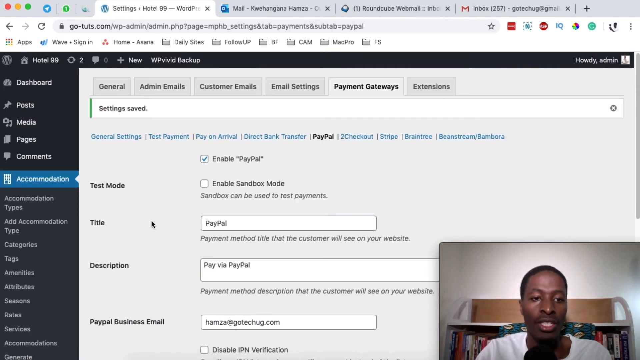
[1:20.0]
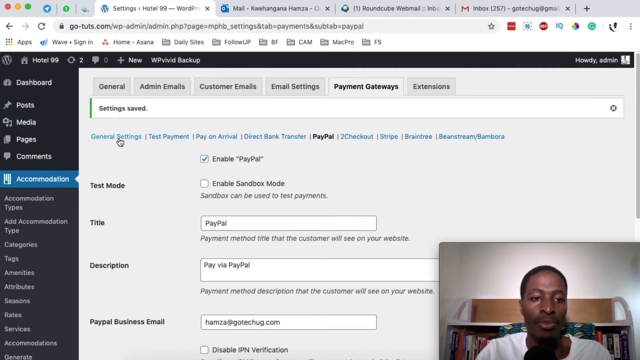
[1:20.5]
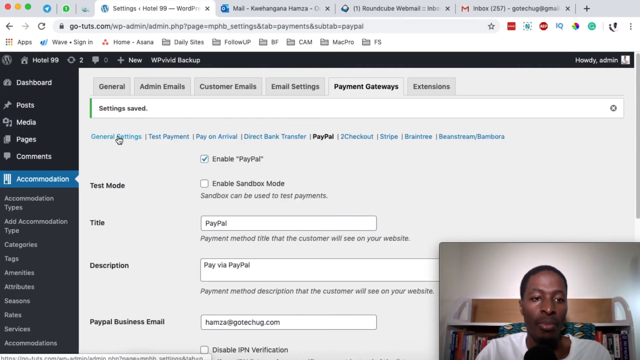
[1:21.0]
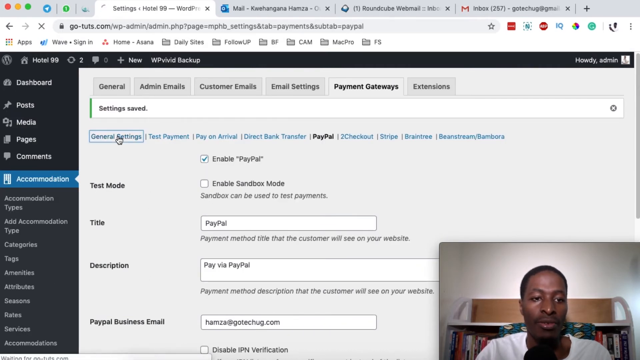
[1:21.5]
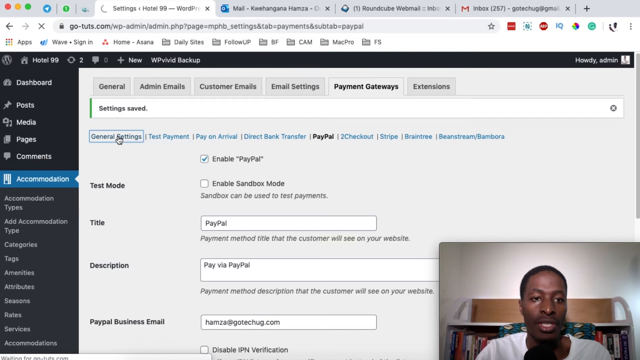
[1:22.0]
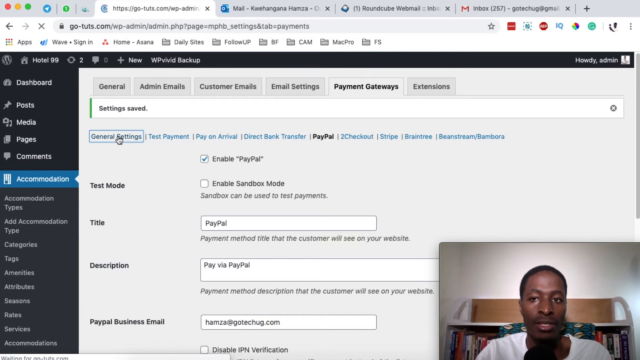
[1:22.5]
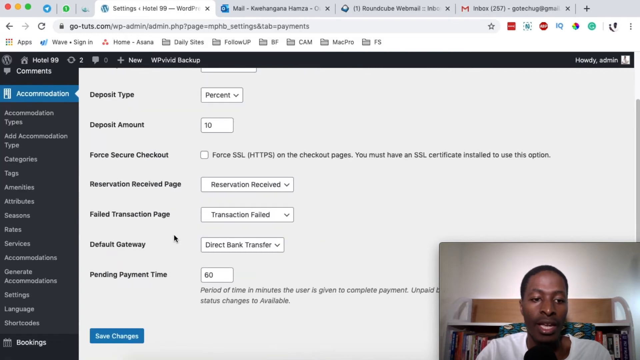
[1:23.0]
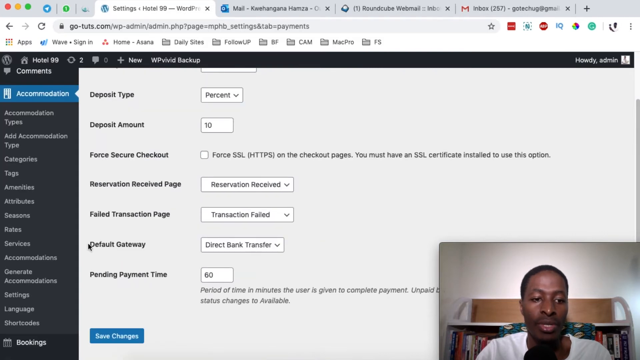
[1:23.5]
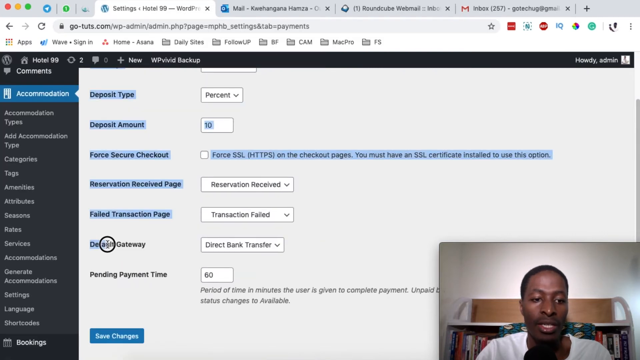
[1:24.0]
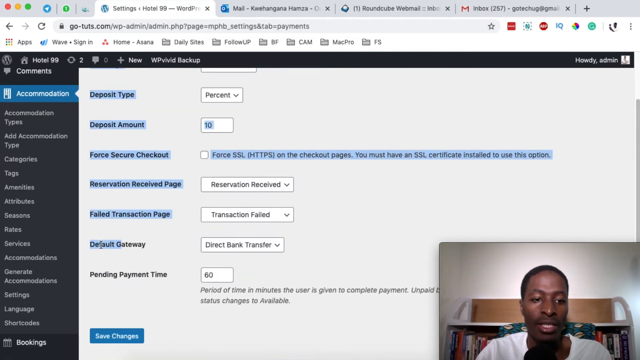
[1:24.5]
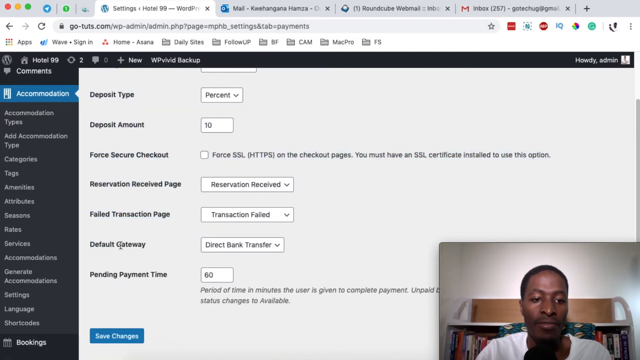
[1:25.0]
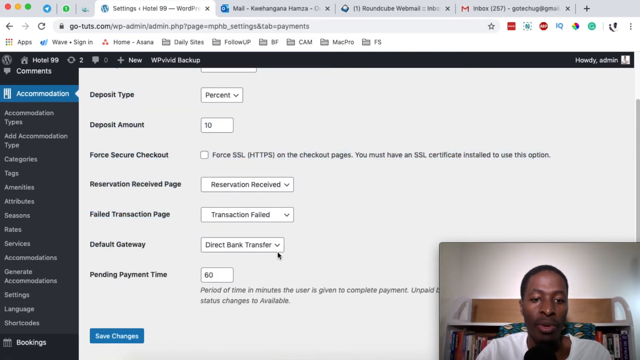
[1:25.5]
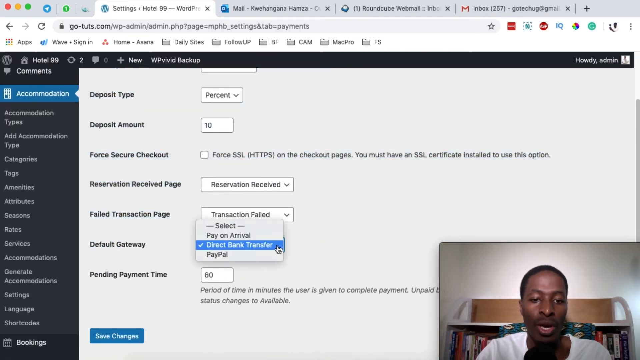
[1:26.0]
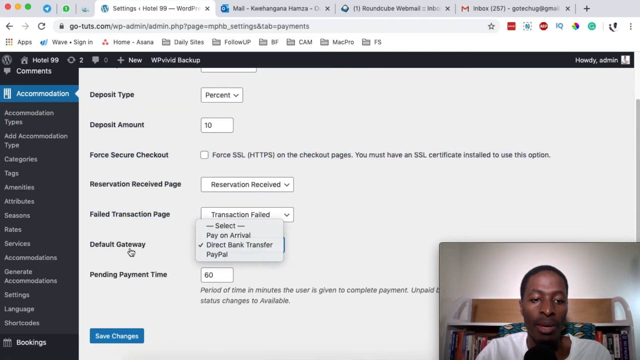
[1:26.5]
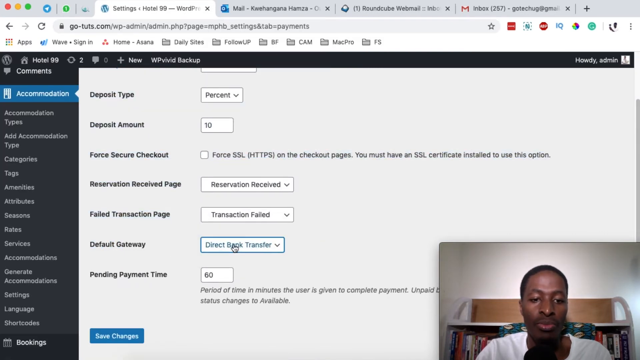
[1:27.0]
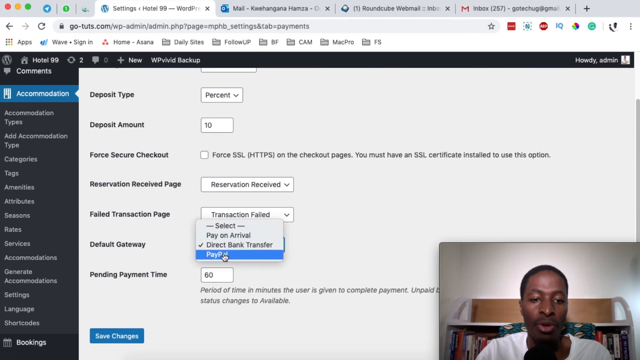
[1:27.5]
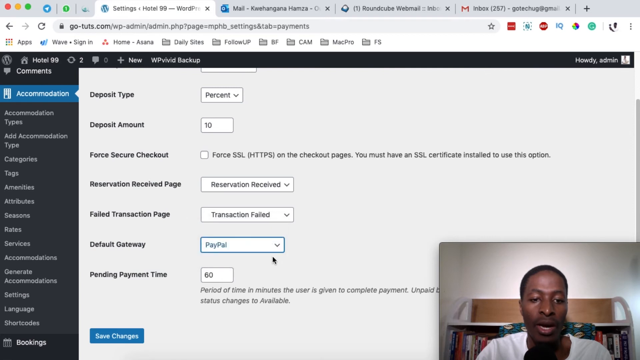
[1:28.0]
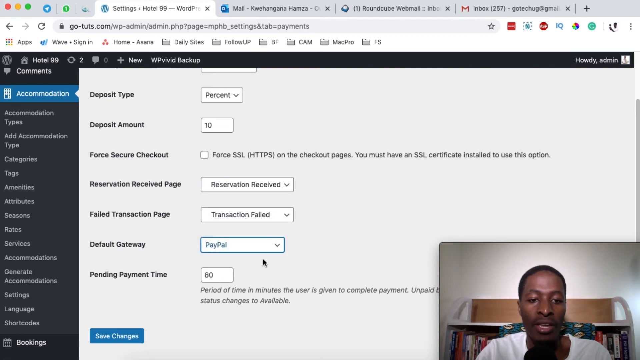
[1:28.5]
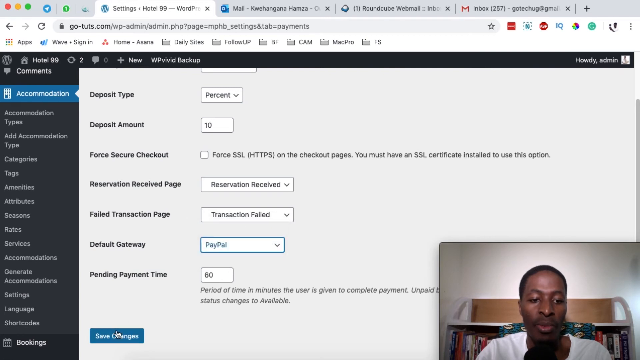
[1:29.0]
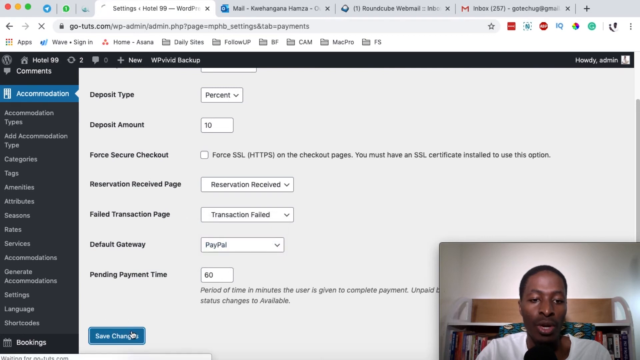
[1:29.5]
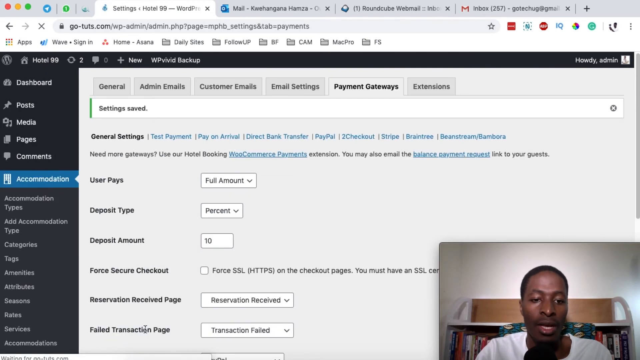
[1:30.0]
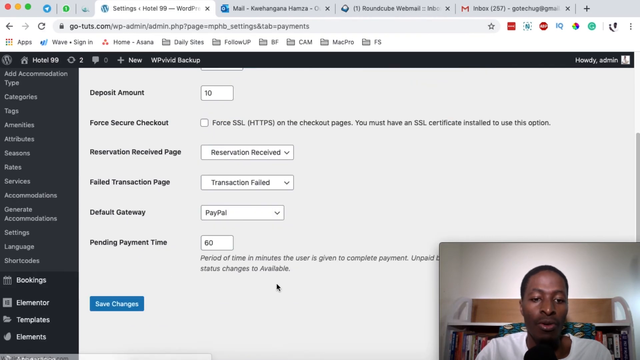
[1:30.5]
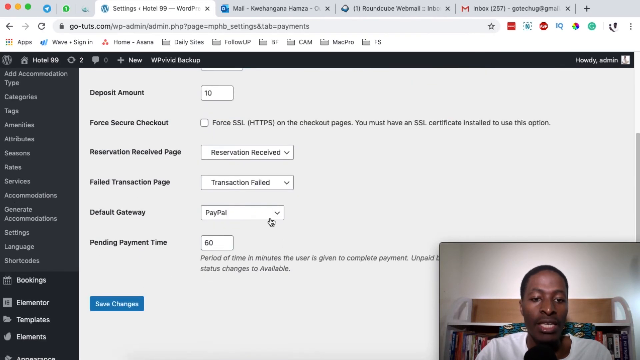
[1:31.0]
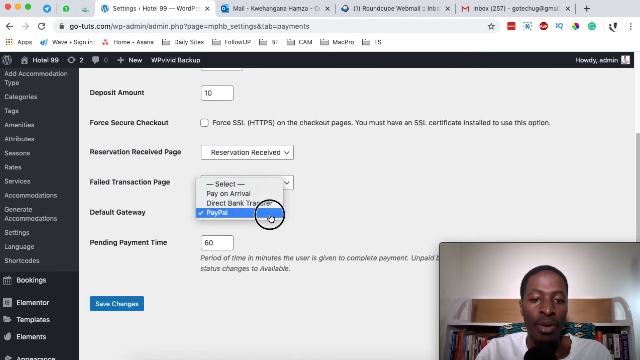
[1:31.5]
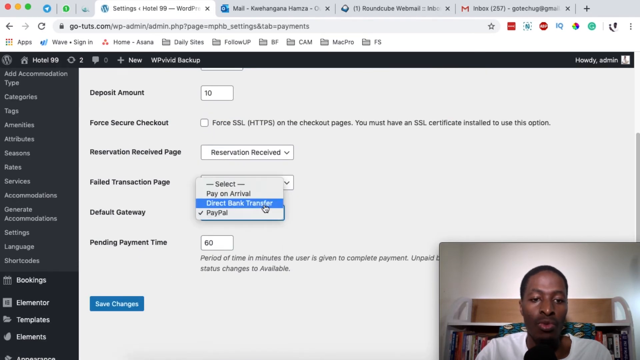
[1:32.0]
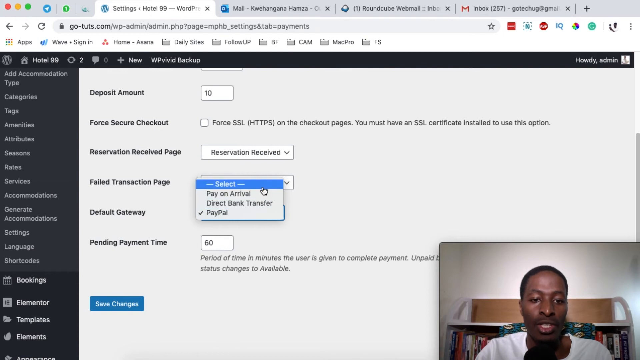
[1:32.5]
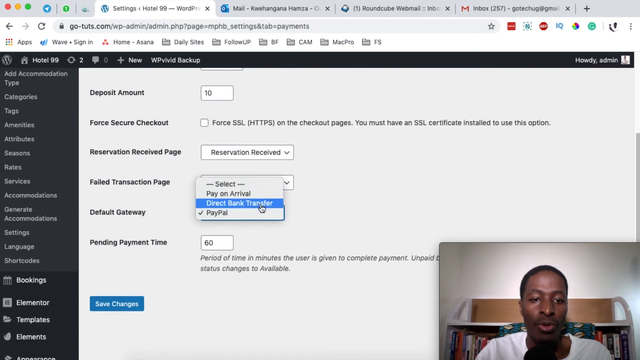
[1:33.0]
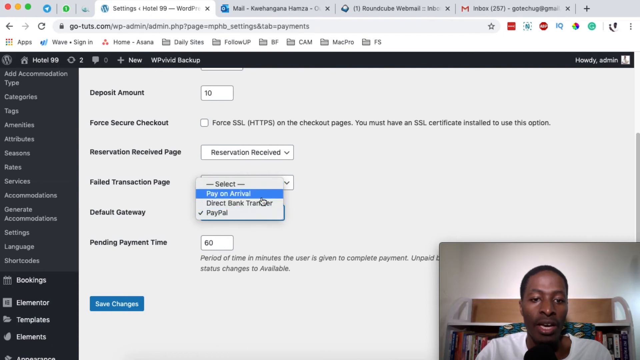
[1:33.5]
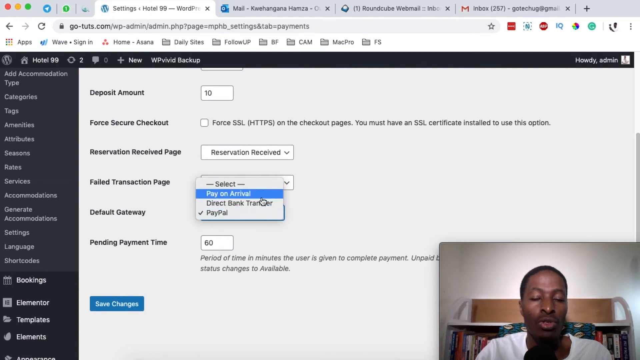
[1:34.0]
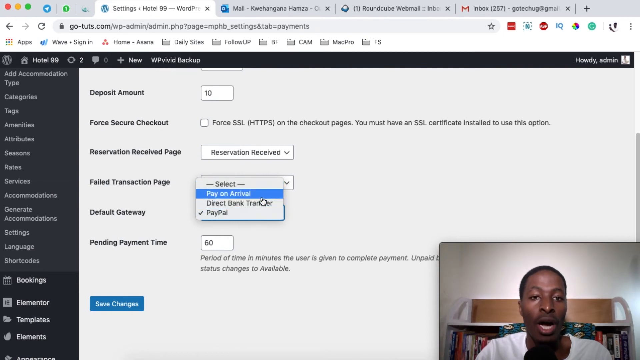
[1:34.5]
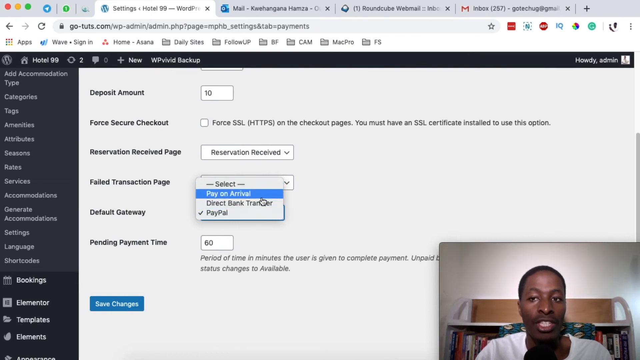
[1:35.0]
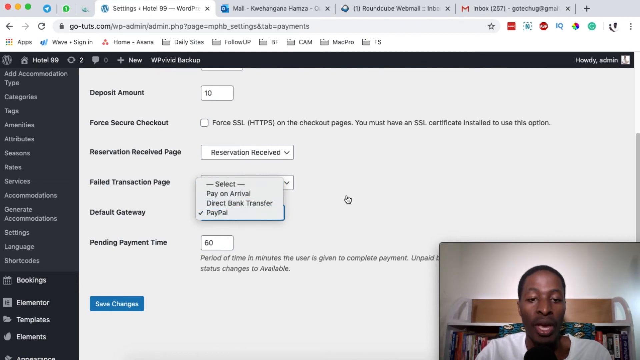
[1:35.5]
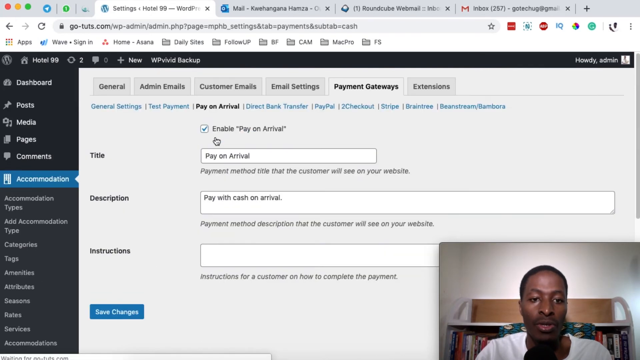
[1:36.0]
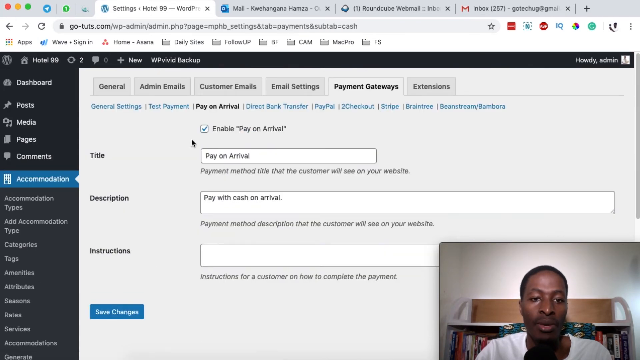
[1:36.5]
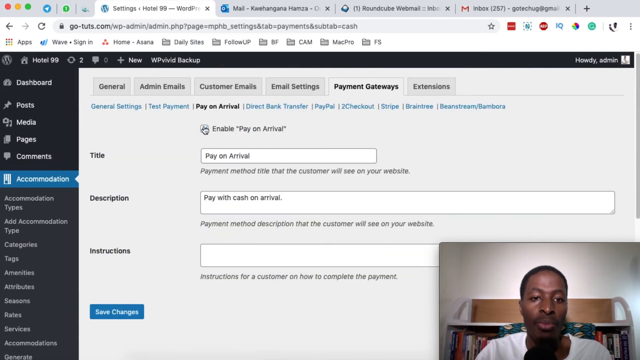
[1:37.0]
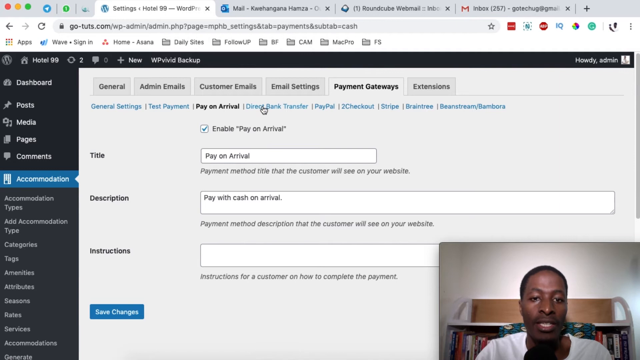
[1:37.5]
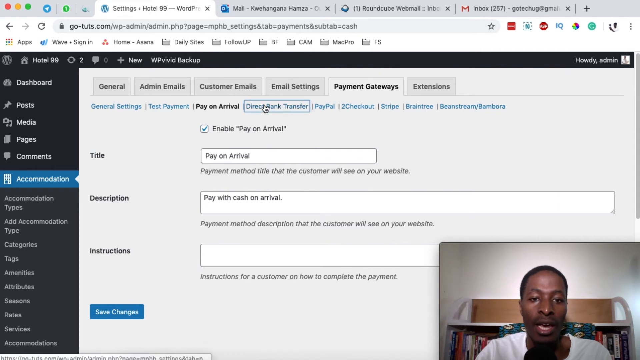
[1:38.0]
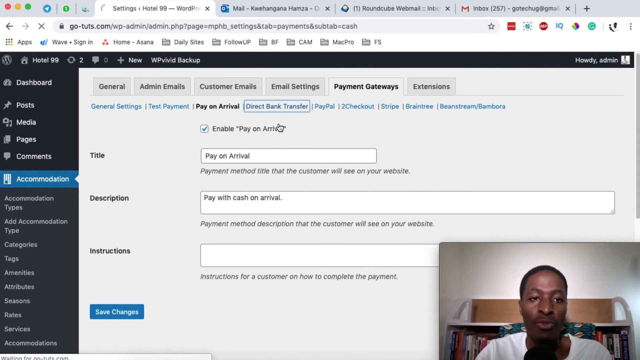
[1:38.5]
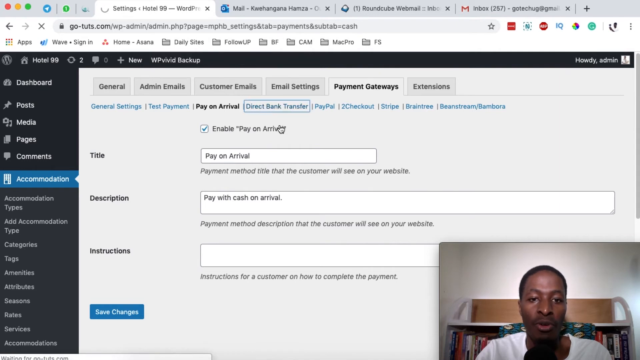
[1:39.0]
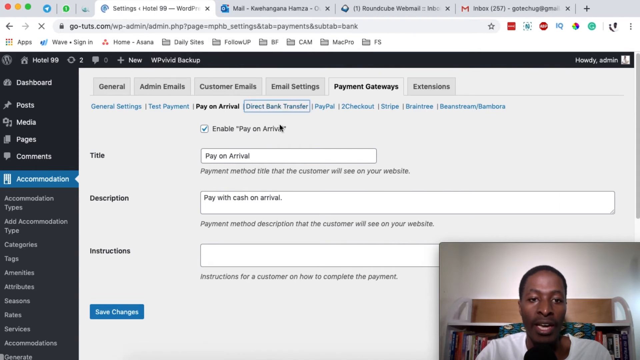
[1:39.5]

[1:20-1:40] With the Accommodation button selected, the Payment Gateways tab in the middle of the page and the PayPal button below it are selected, the information is filled in, and the Enable PayPal checkbox is checked. The person then clicks the General Settings button, which opens the General Settings page, fills in the default gateway as PayPal, and clicks Save Changes below it. They go back to the default gateway button, then return to the main page, where "Direct Bank Transfer" is highlighted; clicking it opens that page. The person's video appears in the lower right corner of the screen.